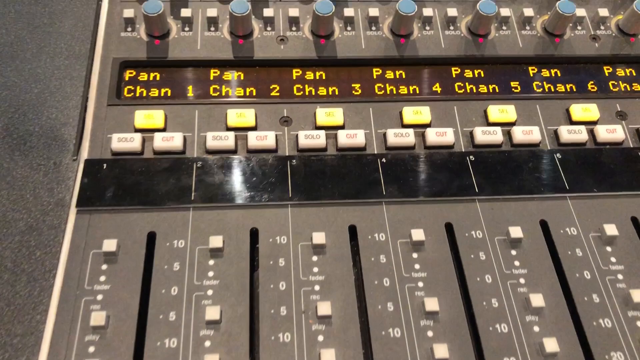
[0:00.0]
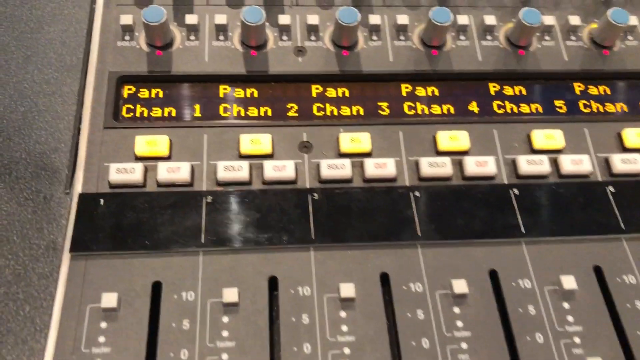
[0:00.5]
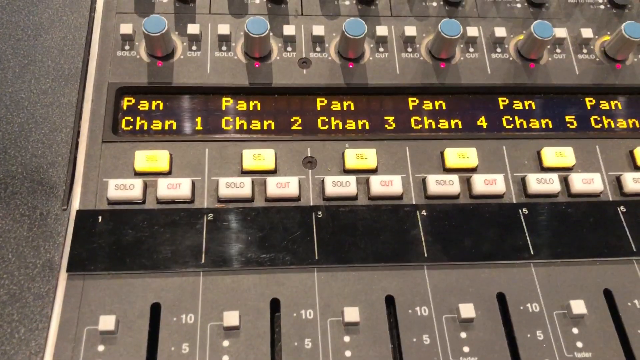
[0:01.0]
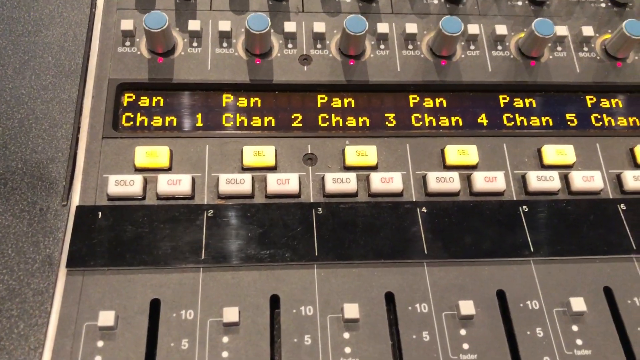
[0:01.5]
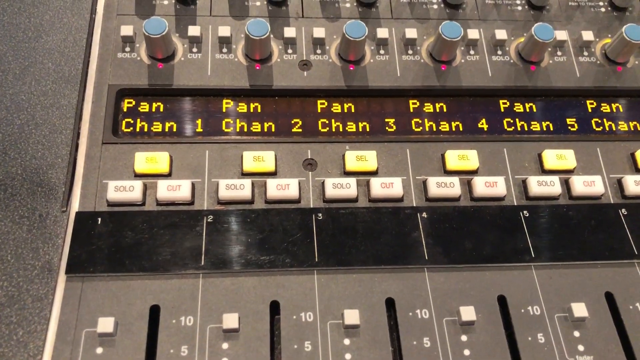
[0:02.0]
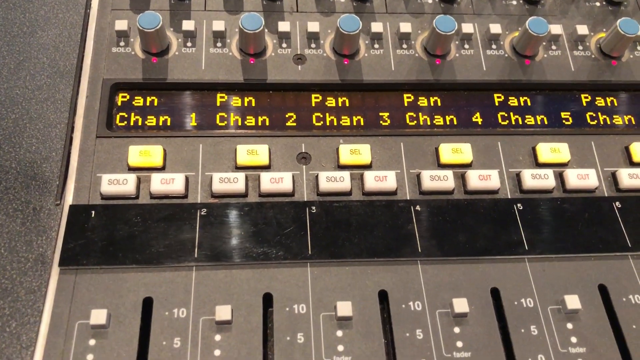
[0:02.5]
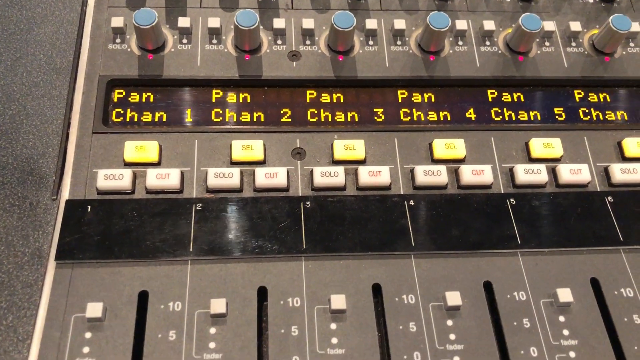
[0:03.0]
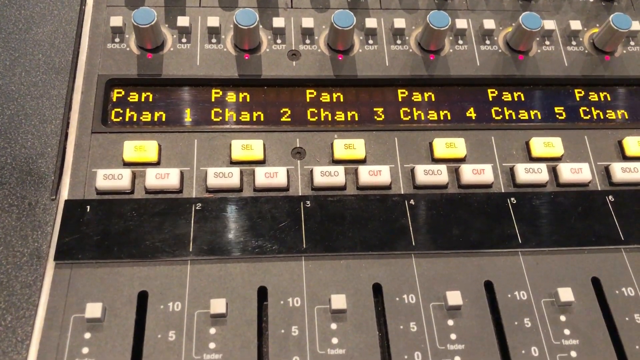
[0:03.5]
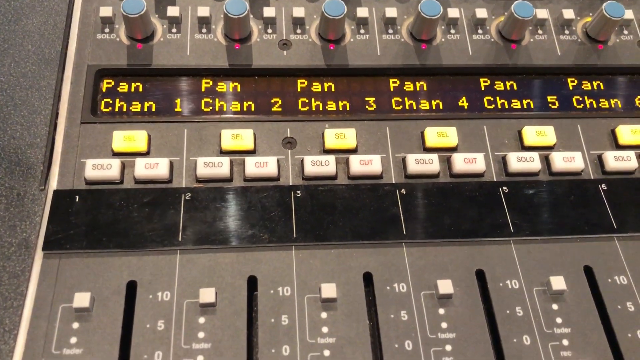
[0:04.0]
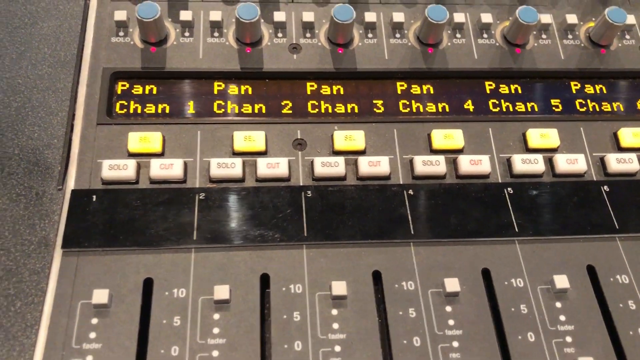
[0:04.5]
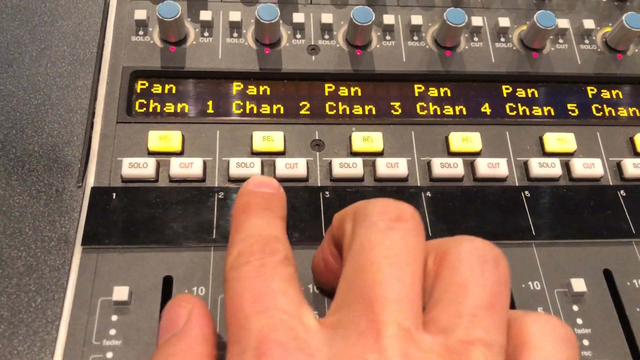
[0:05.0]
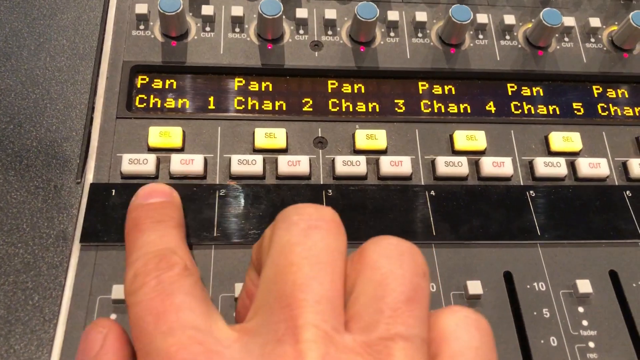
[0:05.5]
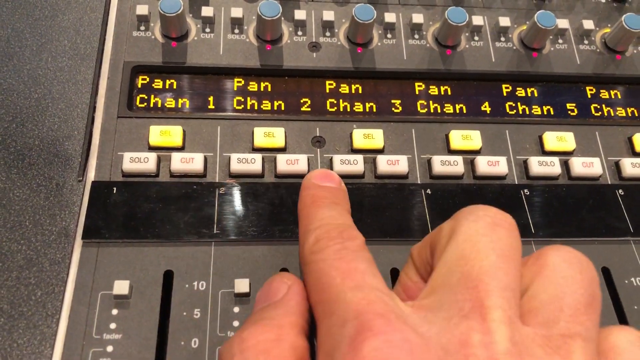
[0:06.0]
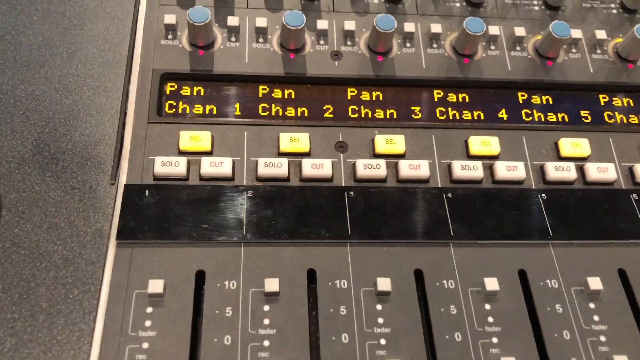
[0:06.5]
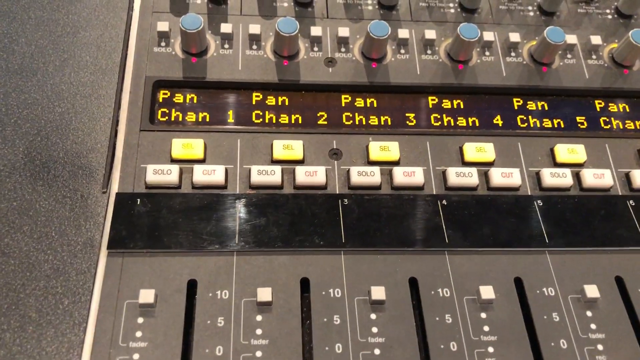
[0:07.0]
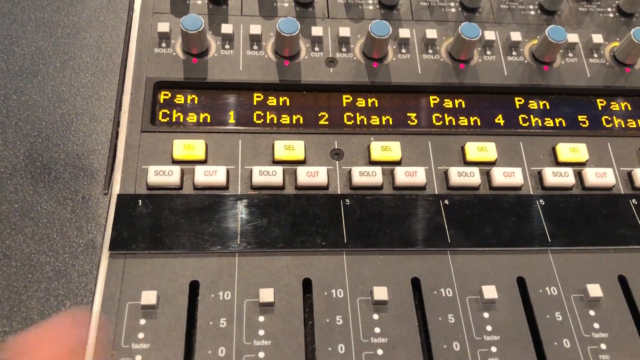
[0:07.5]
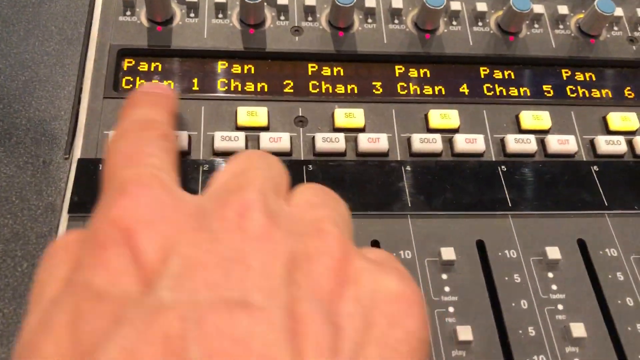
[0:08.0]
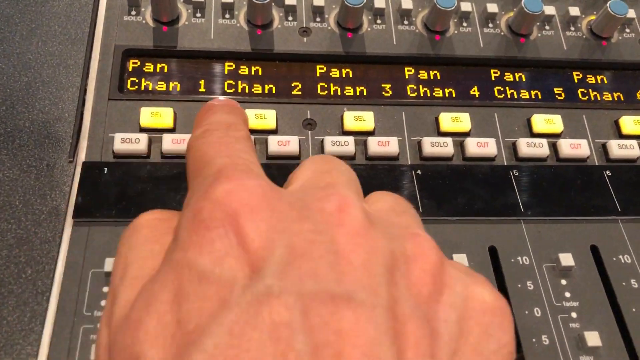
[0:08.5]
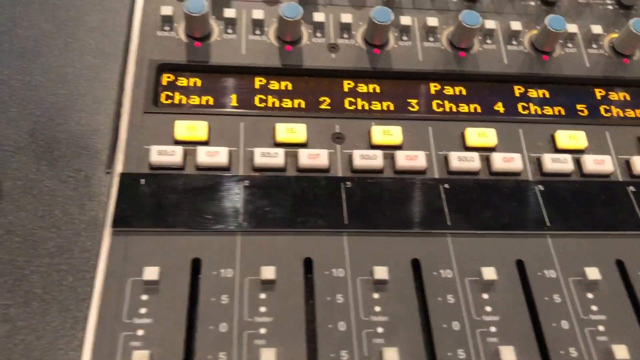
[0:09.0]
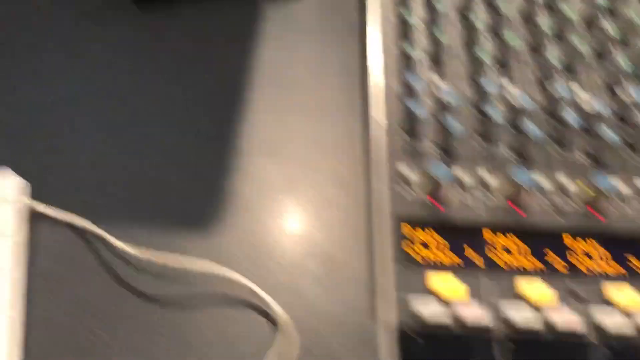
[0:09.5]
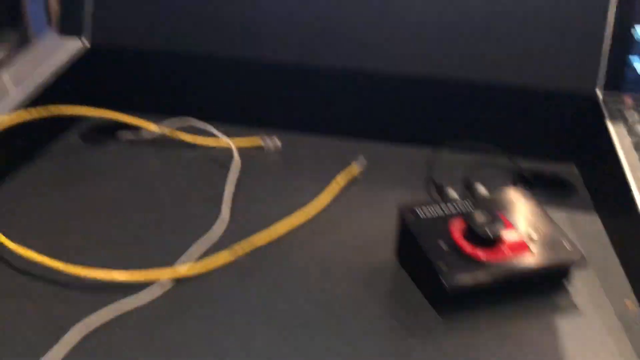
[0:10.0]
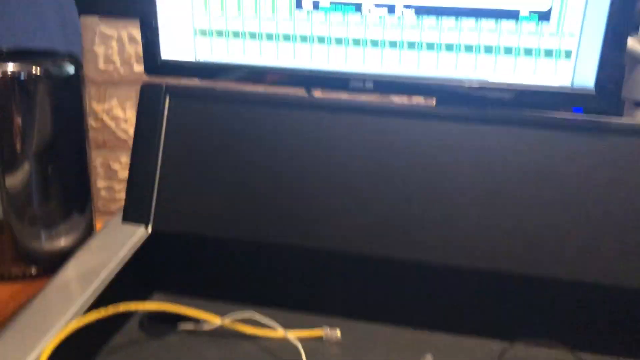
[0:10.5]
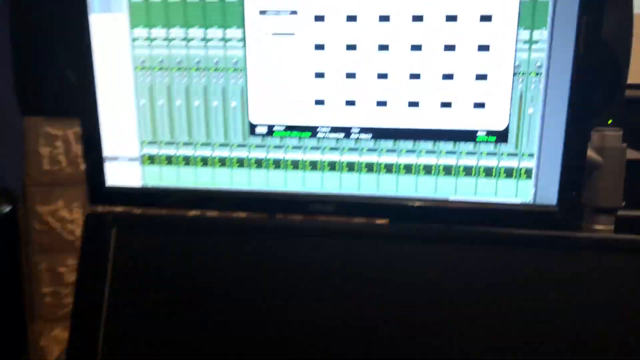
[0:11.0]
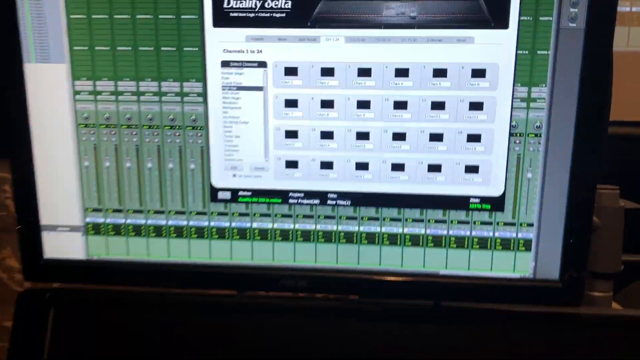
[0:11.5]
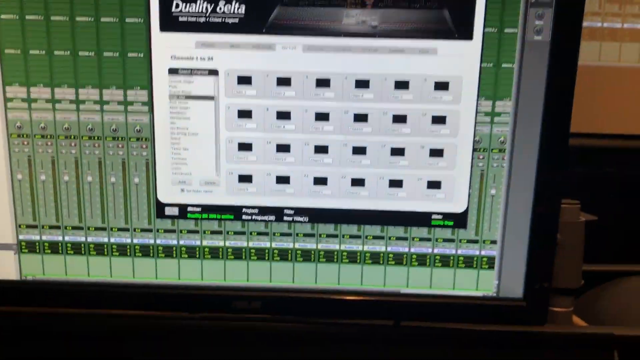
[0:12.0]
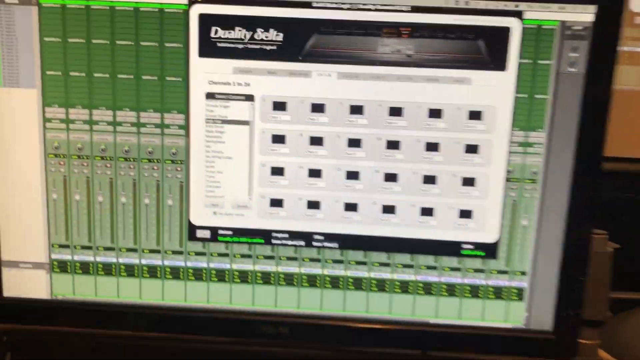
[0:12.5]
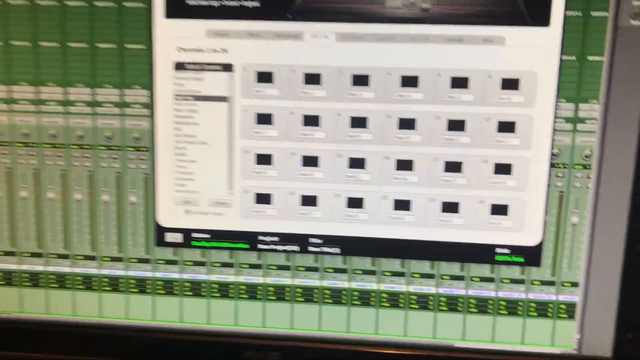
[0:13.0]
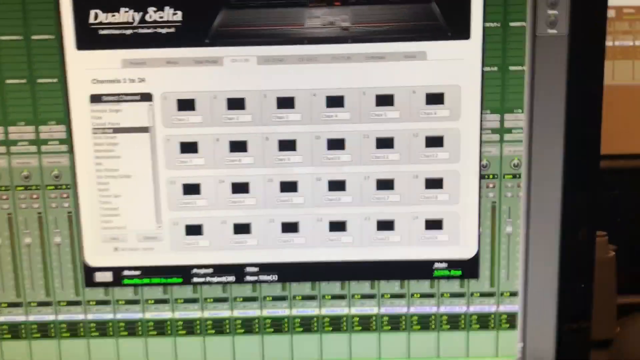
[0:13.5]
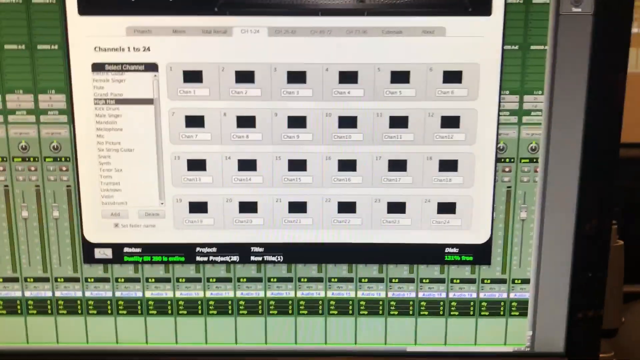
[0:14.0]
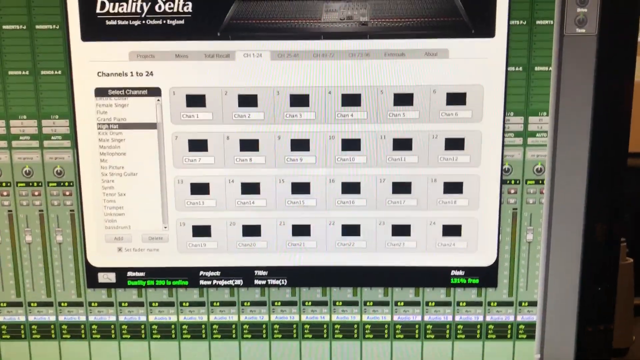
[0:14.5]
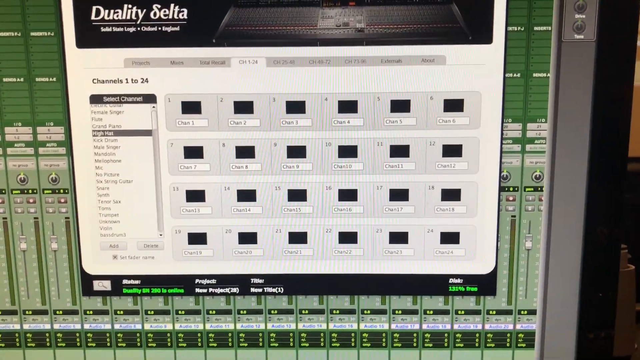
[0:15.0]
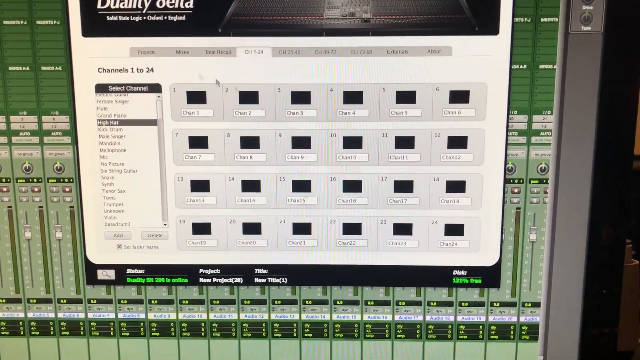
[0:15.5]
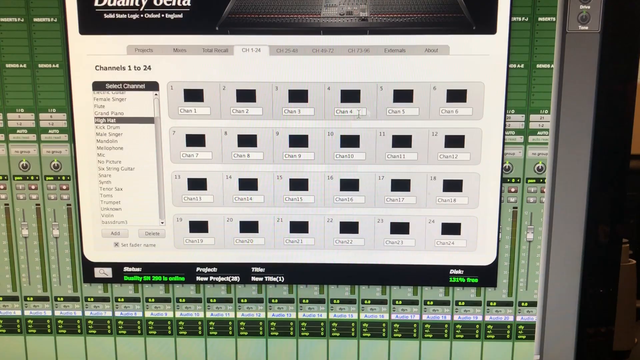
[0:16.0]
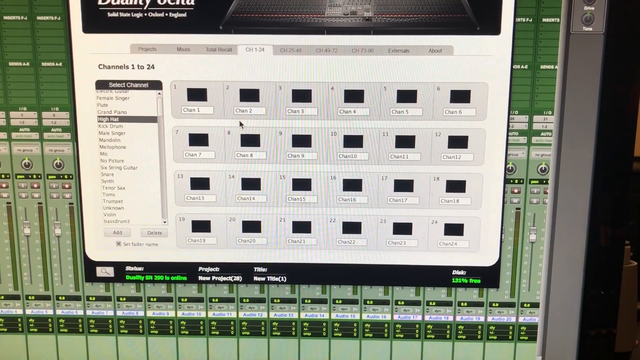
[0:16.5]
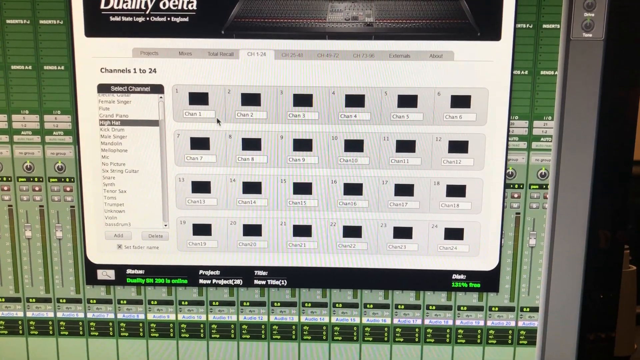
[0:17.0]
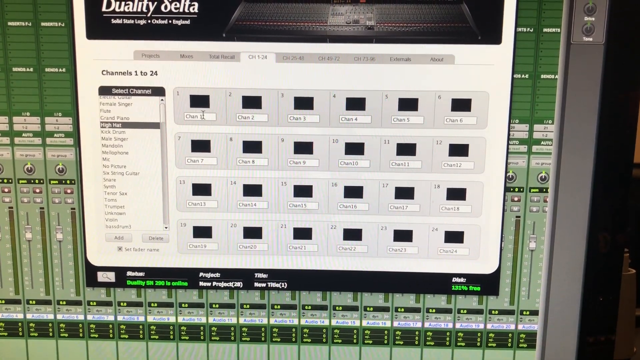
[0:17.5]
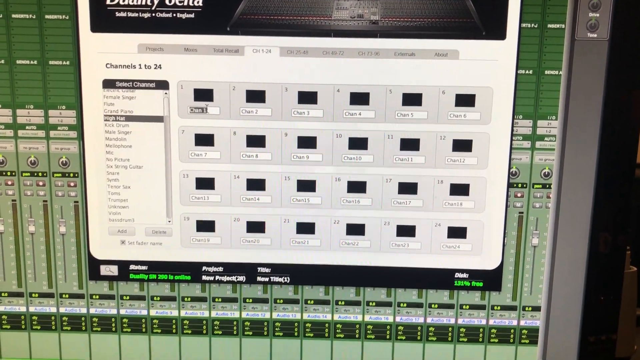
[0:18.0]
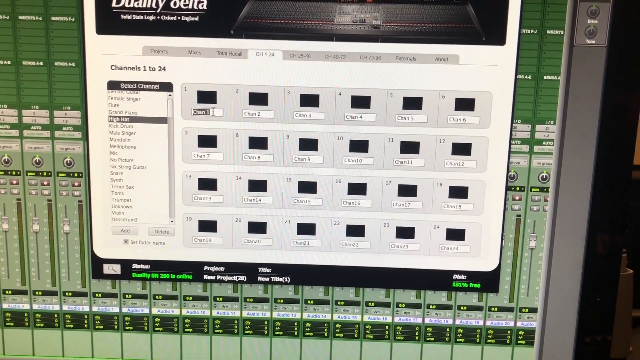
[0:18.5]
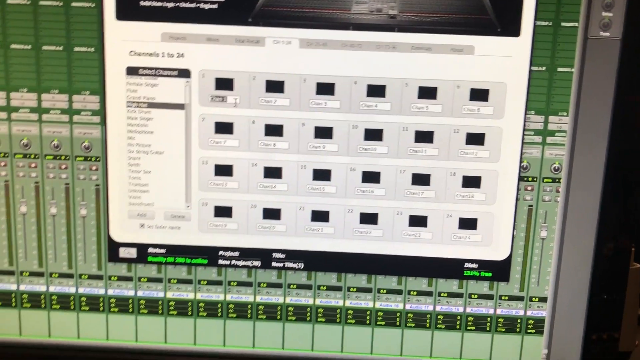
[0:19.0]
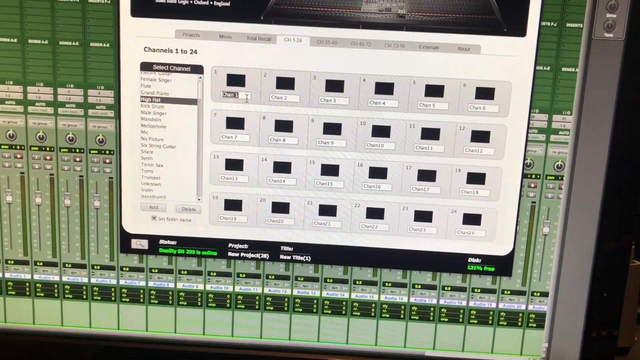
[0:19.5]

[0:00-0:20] What appears to be sound equipment is shown, almost like something for a TV news station. At the top are blue dials that kind of stick out, cylinder-looking with a flat blue tip on top. On the left or right side of each there seems to be a little white dial that can go up and down. There appear to be six of them, with "pan" in orange underneath, along with "chan one" and "chan two", possibly for channel; apparently at least six channels that can pan at different angles. Right underneath is a series of yellow buttons that look like they are glowing, maybe meaning they are on, and underneath those are two sets of white buttons. There are also digital interfaces and four sliding buttons, visible all the way going from five to ten. The camera kind of zooms in a little, and as it does, the image kind of flickers a little on channel one and channel two. Someone indicates with their index finger the row of white buttons from left to right, then points out a couple of the yellow glowing buttons. The hands move up and the camera kind of looks at a computer monitor, zooming in. Text mentions "duality", and the screen shows almost the same thing: green and light green sliding buttons that move up and down, with a white box over them. There appear to be about four rows of black boxes, and to the left there seems to be a drop-down list.